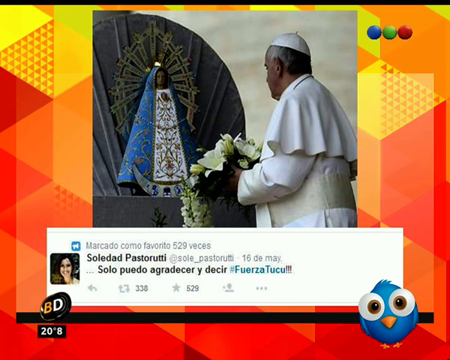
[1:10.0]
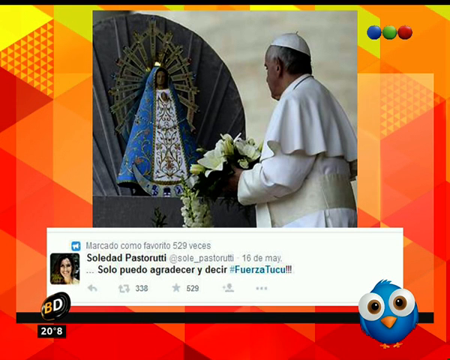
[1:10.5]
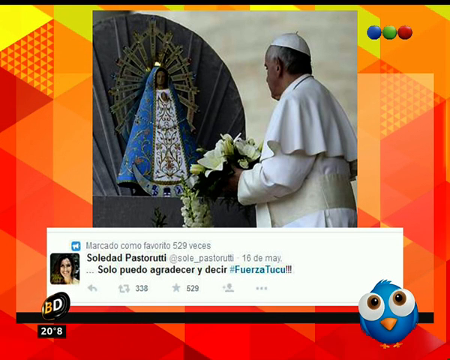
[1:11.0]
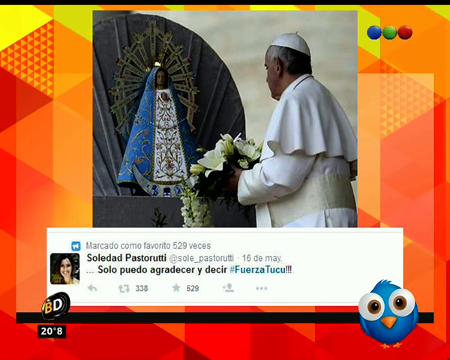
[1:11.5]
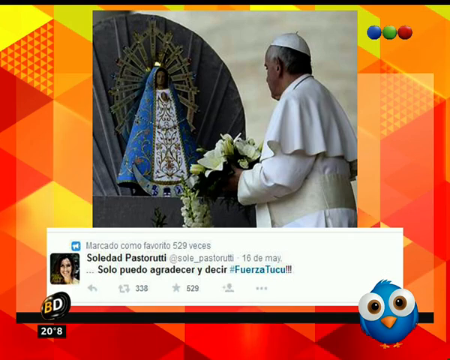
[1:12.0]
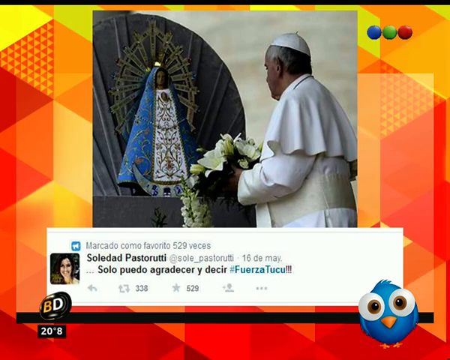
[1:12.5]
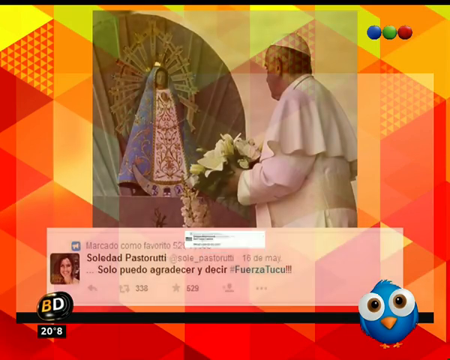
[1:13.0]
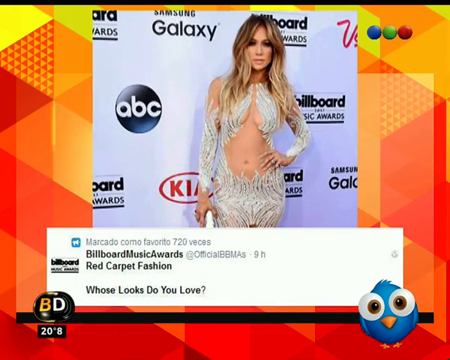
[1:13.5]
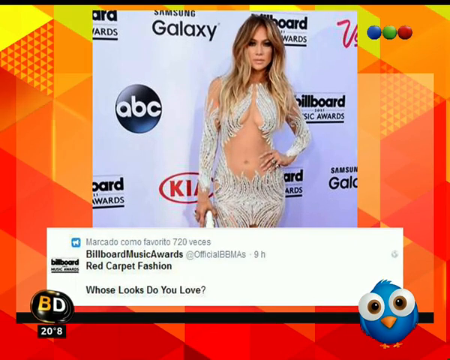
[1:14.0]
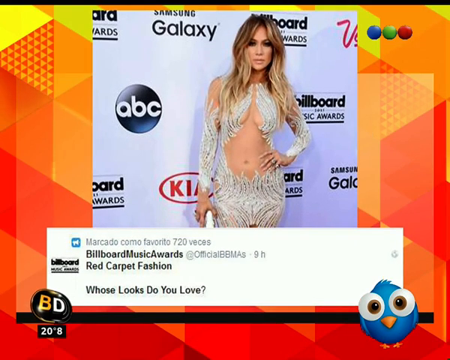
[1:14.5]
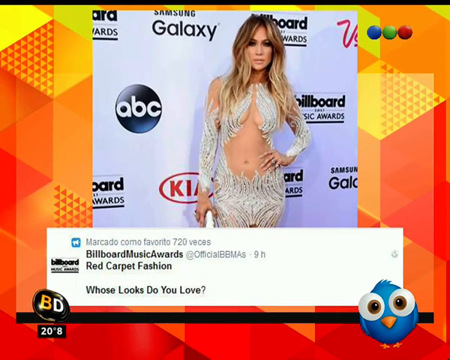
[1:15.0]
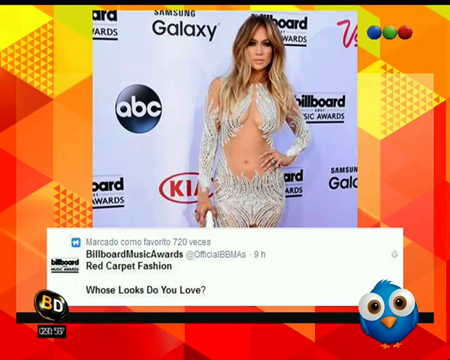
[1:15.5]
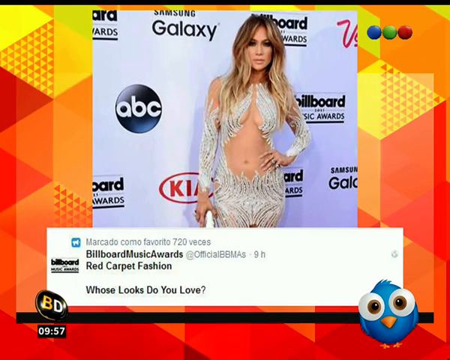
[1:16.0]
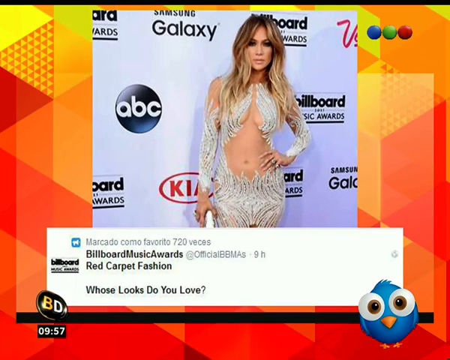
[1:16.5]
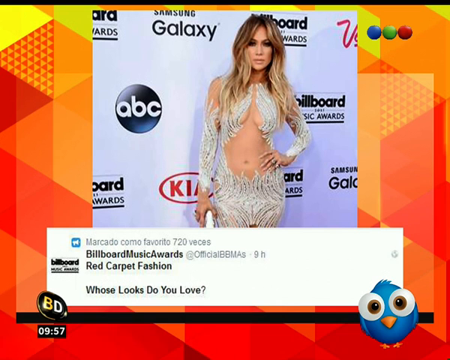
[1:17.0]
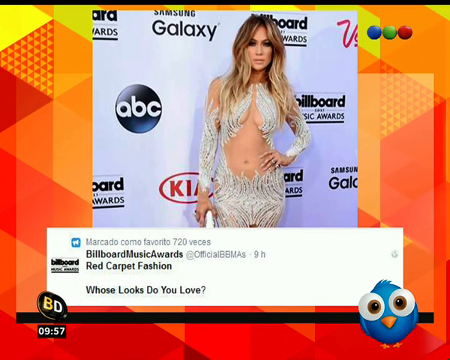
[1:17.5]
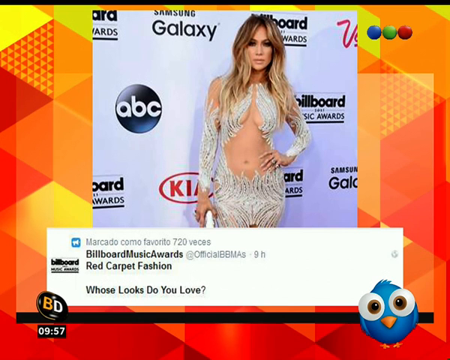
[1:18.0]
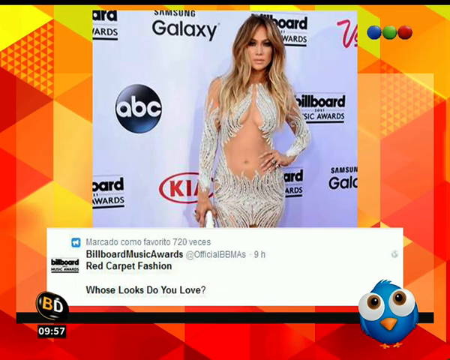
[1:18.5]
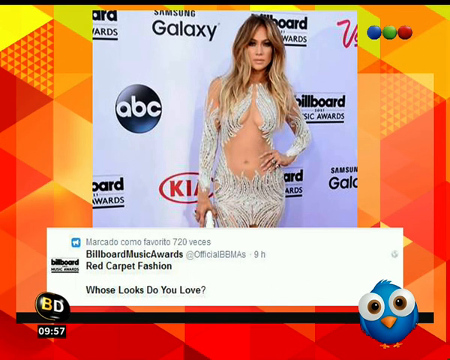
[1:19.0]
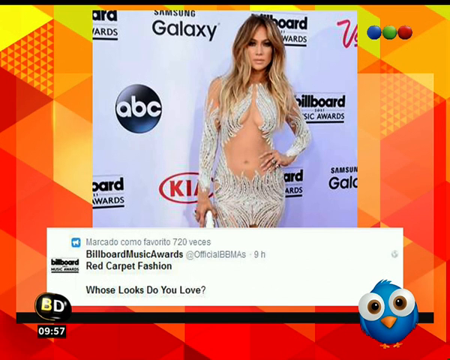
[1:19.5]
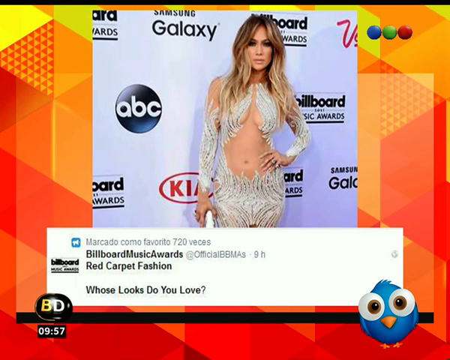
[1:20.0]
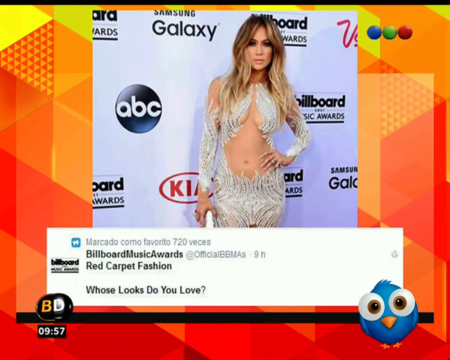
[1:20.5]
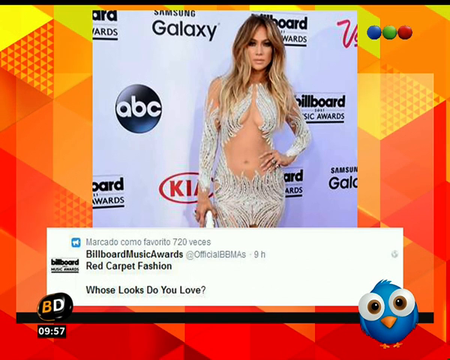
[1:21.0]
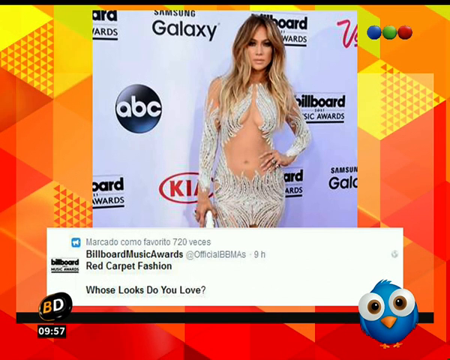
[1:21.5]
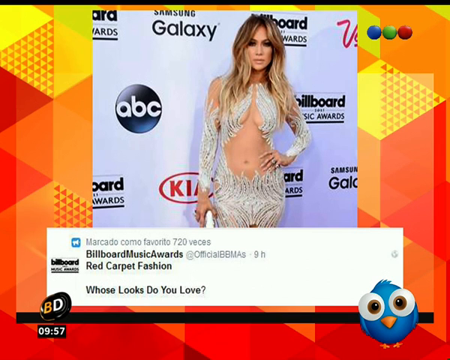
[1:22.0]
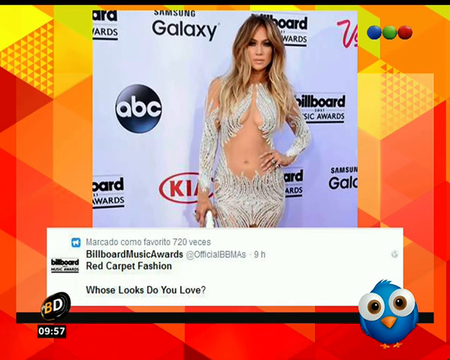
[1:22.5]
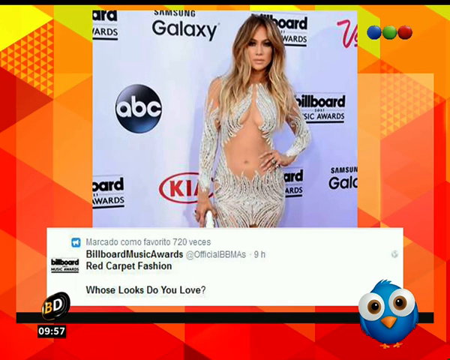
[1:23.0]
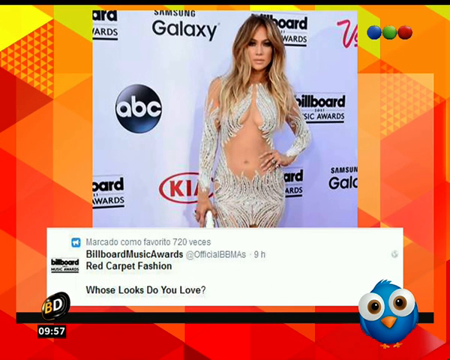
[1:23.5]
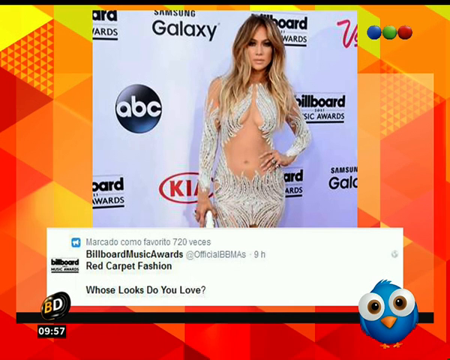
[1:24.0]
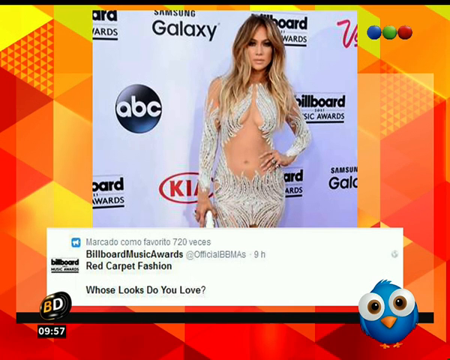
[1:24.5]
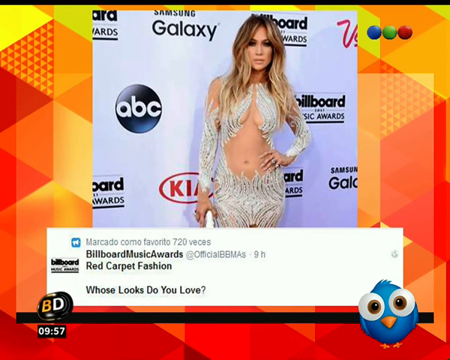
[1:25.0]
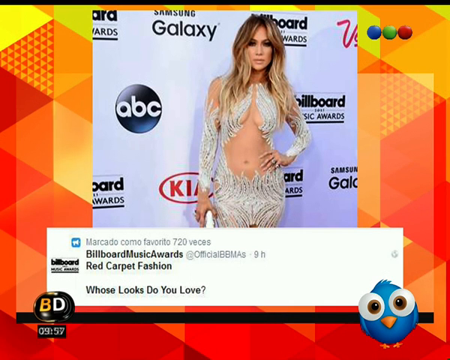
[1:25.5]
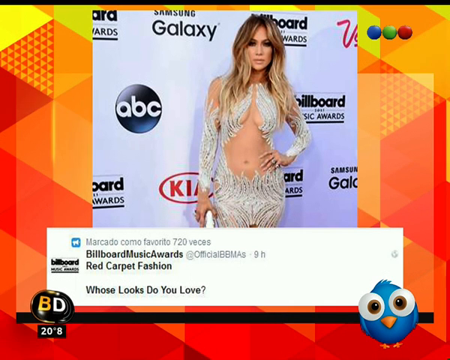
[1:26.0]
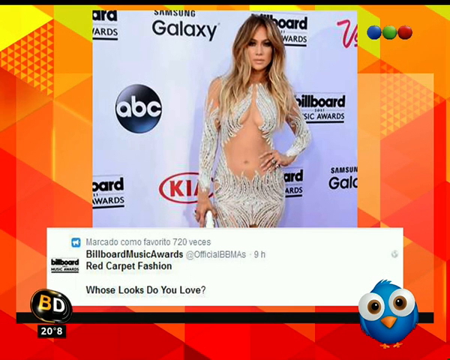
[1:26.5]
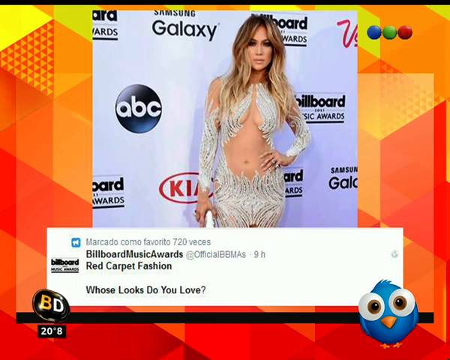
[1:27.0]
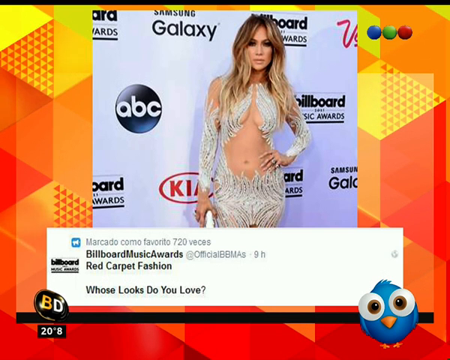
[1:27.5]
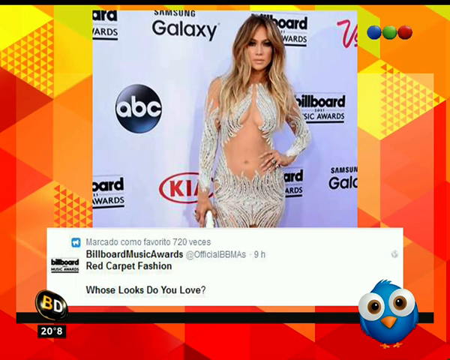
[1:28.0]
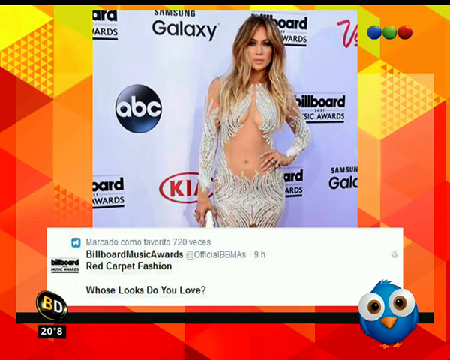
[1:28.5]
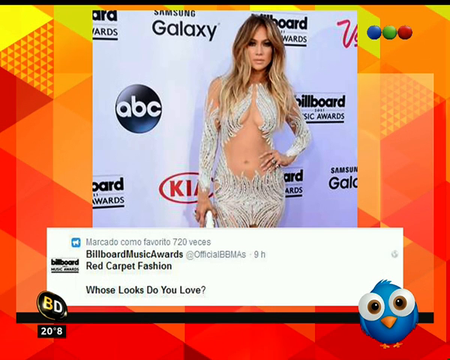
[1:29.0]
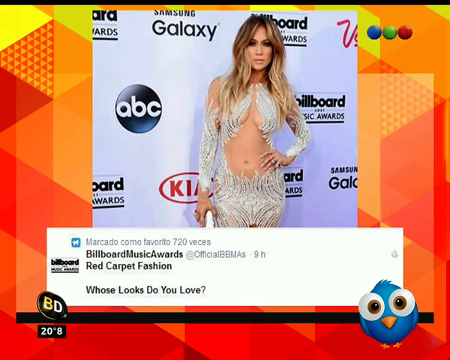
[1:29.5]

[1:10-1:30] The background is yellow with red and orange. A picture shows the Pope in his beanie and his uniform, holding white flowers that look like lilies. He is looking at a statue of Mary, who wears a blue cape with white underneath it and flickers of gold. The background is gray. Next comes a picture of Jennifer Lopez, with text reading "Samsung Galaxy Billboard Music Awards, ABC," then "Kia, Samsung Galaxy." Text also reads "Mercado Como Favorito" with 720 votes, and "Billboard Music Awards at official BBMA nine hours ago. Red carpet fashion. Whose look do you love?" "Billboard" is on the left. Jennifer Lopez has brown hair with blonde highlights and wears a white dress with cutouts at the chest, revealing the underside of her breasts and her whole belly and belly button. She has one arm on her hip and holds a bag, also white, with the other. The hand on her hip has two rings on the last two fingers, and there is a ring on another finger as well. She is posing at the awards. The bird is at the bottom right. The view then returns to the Pope.